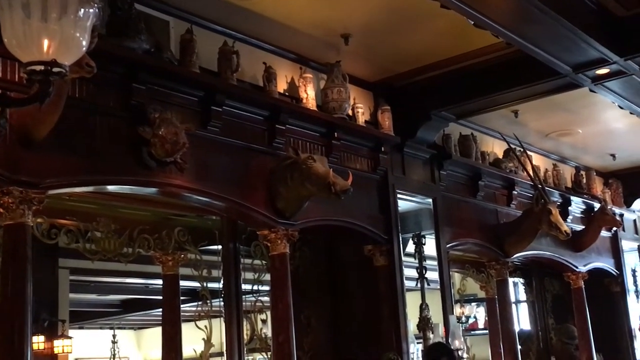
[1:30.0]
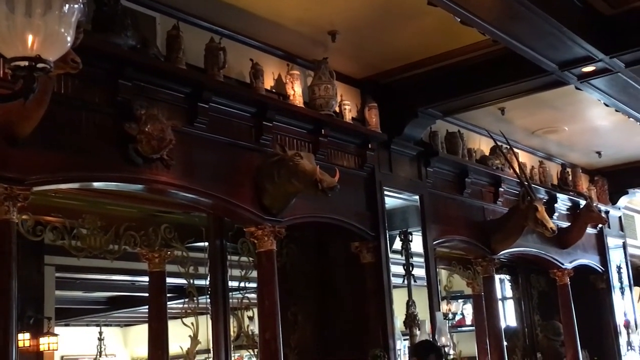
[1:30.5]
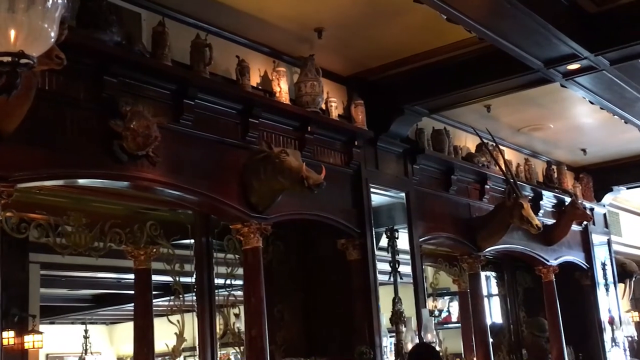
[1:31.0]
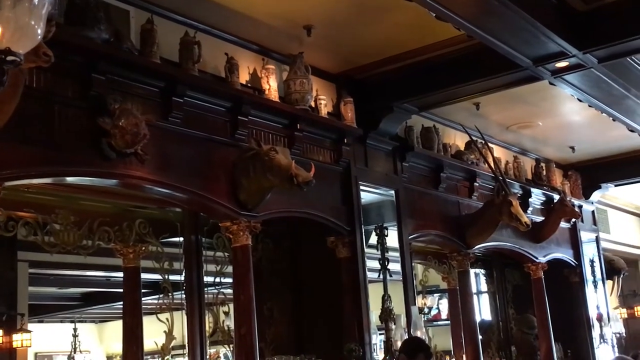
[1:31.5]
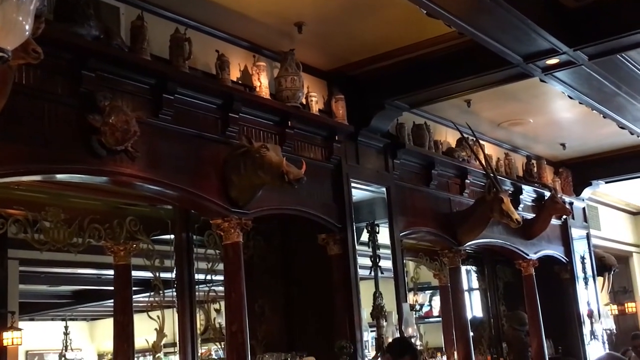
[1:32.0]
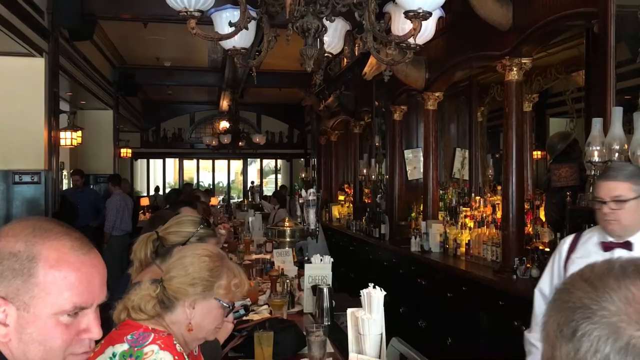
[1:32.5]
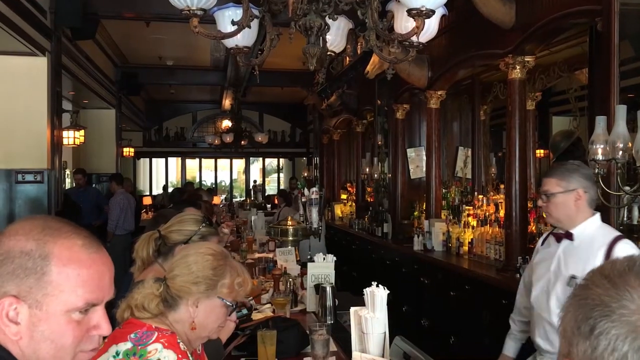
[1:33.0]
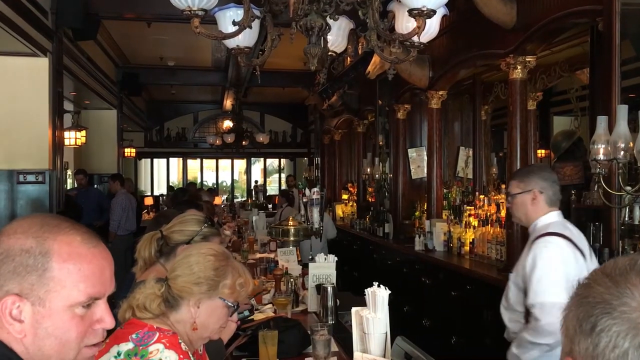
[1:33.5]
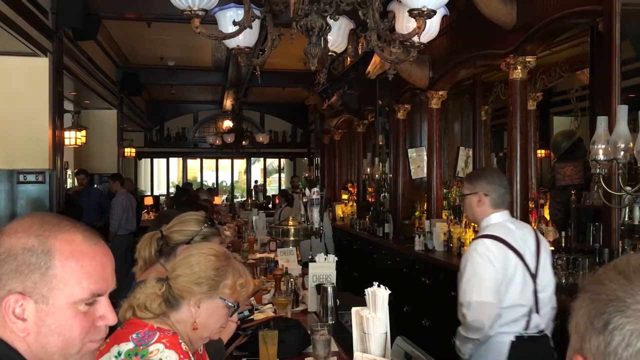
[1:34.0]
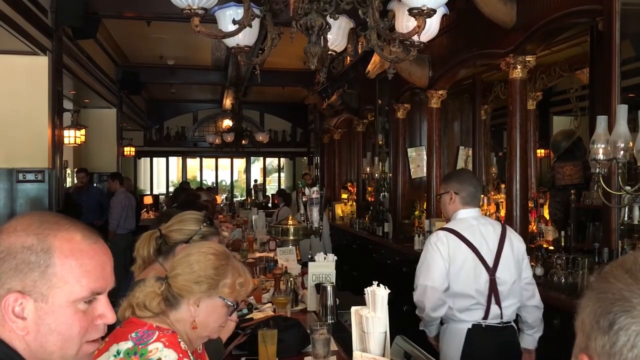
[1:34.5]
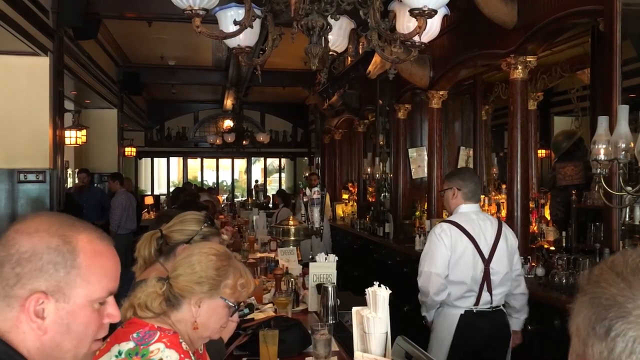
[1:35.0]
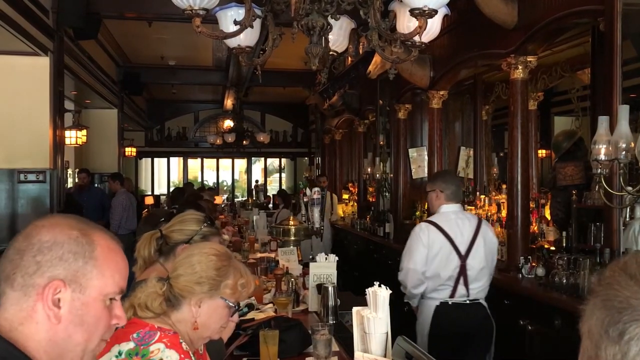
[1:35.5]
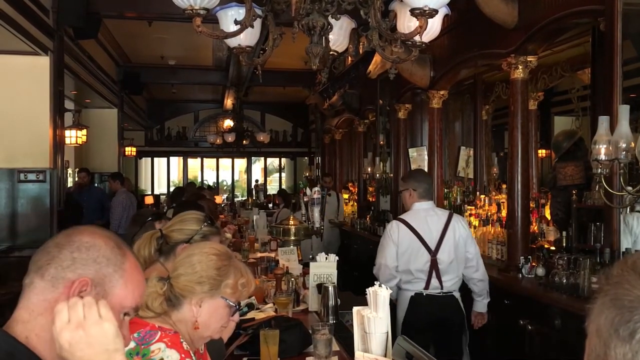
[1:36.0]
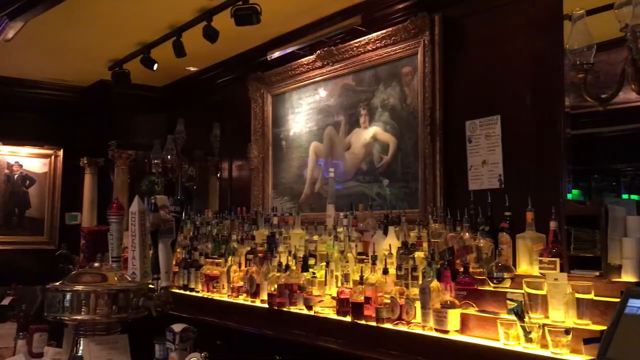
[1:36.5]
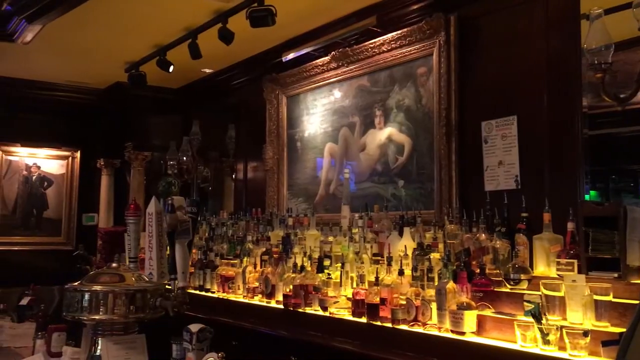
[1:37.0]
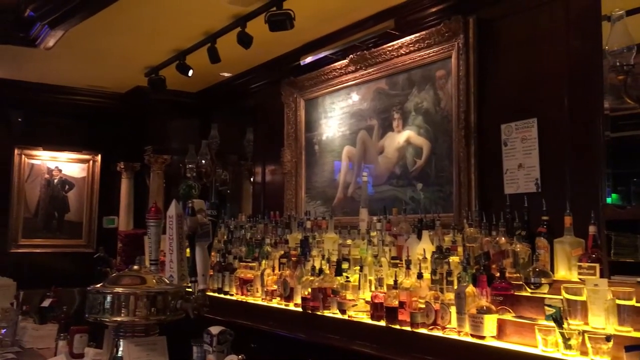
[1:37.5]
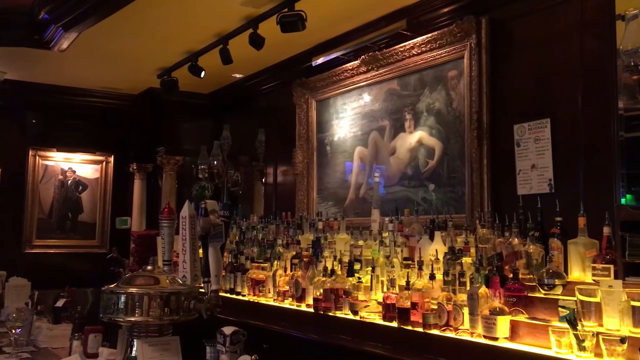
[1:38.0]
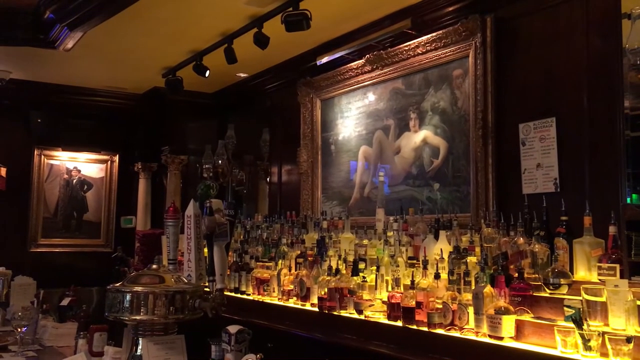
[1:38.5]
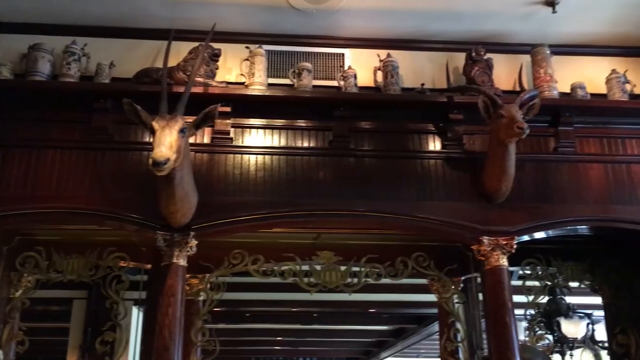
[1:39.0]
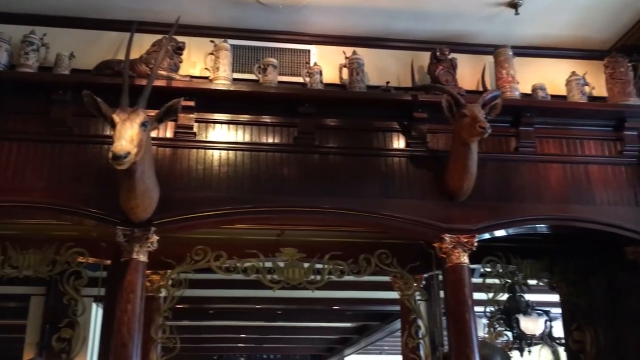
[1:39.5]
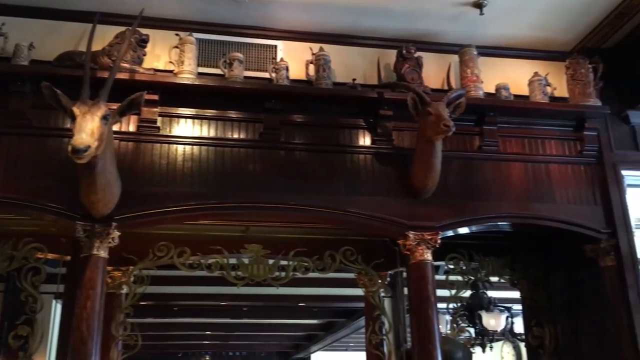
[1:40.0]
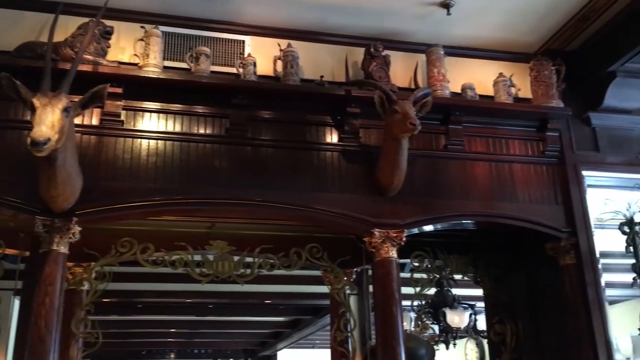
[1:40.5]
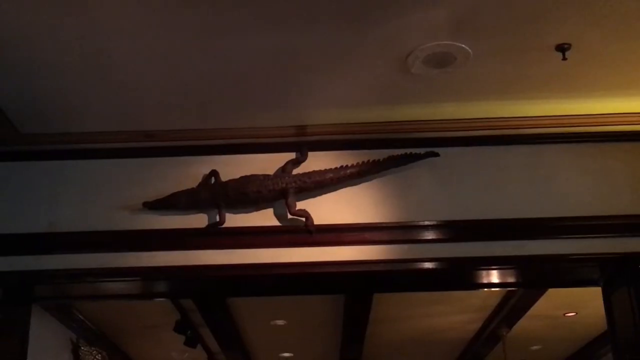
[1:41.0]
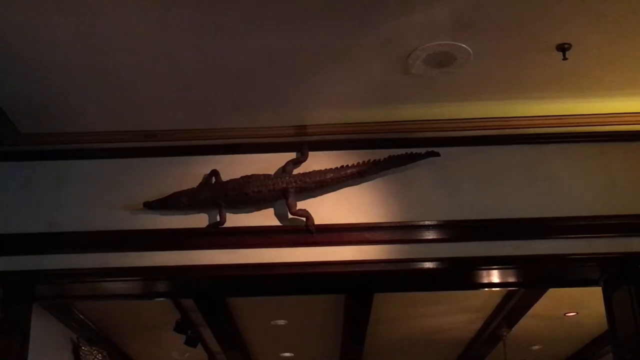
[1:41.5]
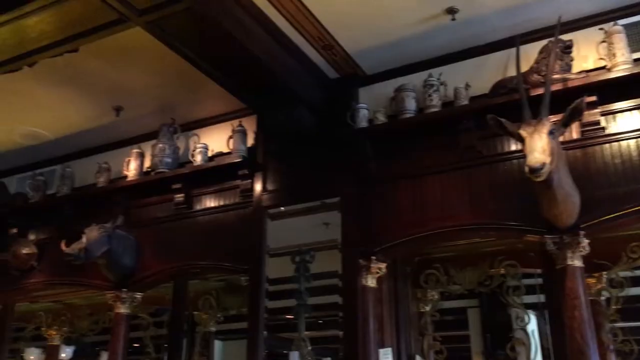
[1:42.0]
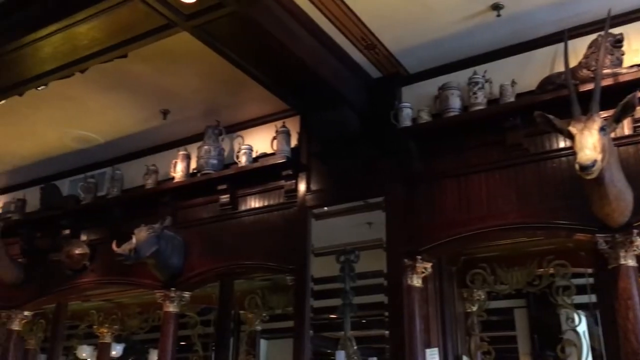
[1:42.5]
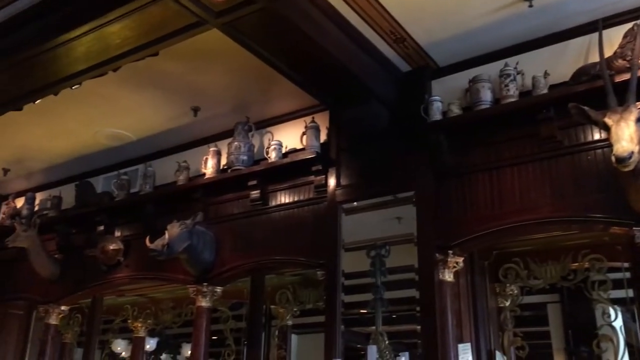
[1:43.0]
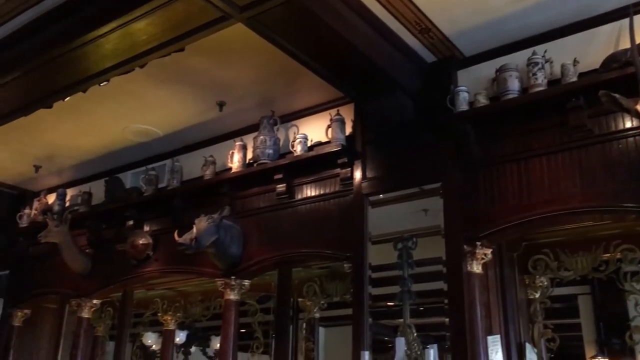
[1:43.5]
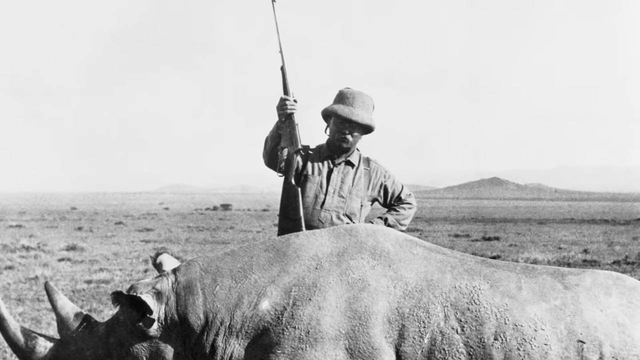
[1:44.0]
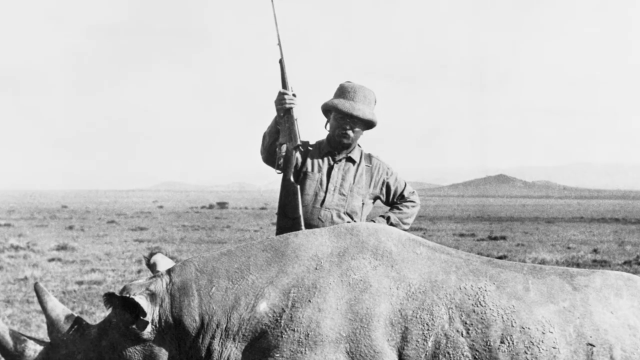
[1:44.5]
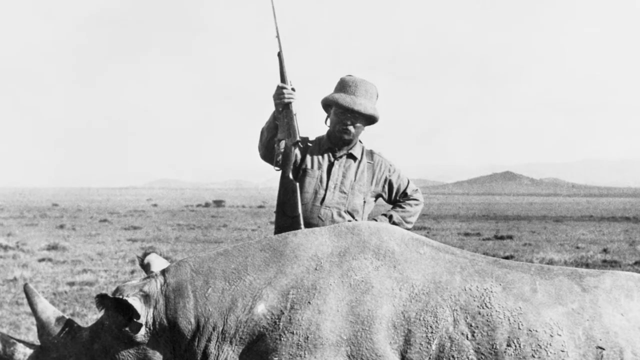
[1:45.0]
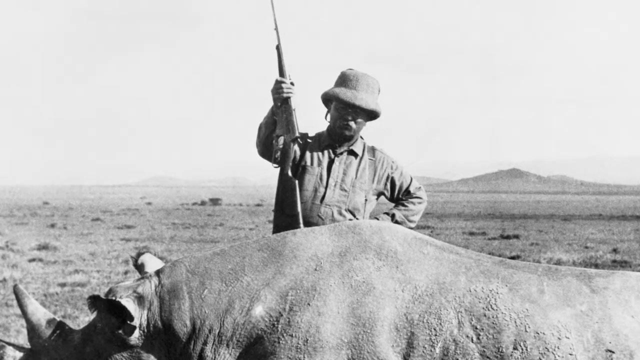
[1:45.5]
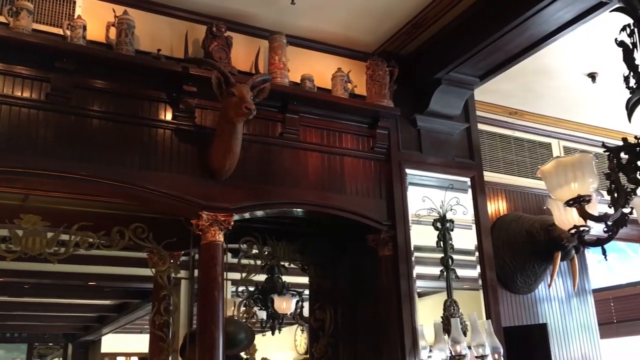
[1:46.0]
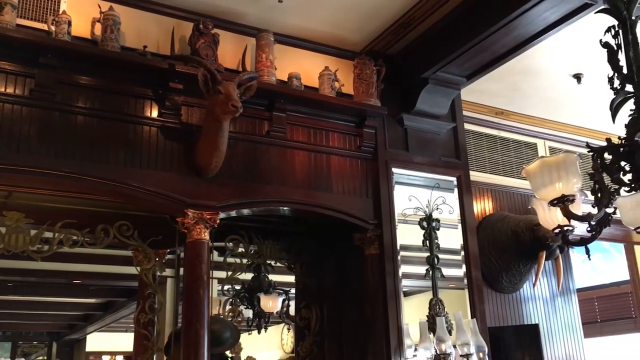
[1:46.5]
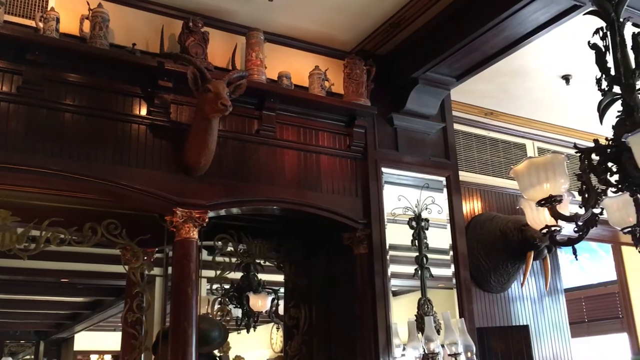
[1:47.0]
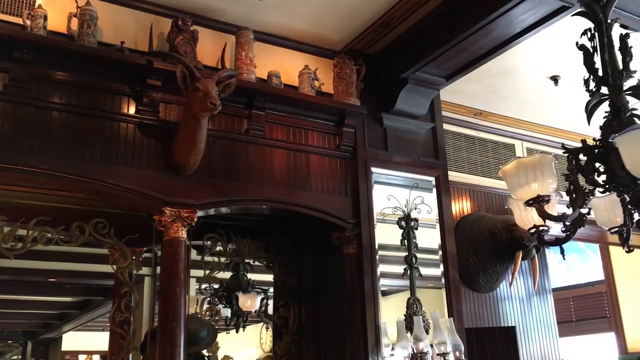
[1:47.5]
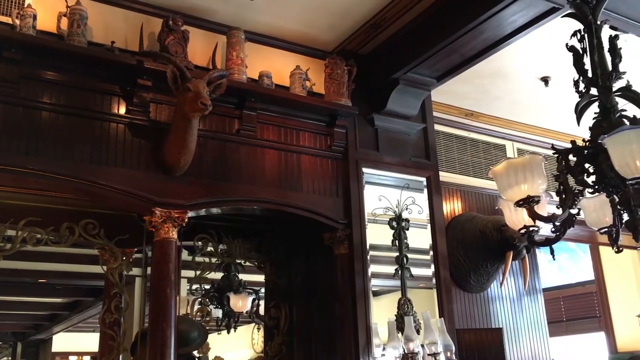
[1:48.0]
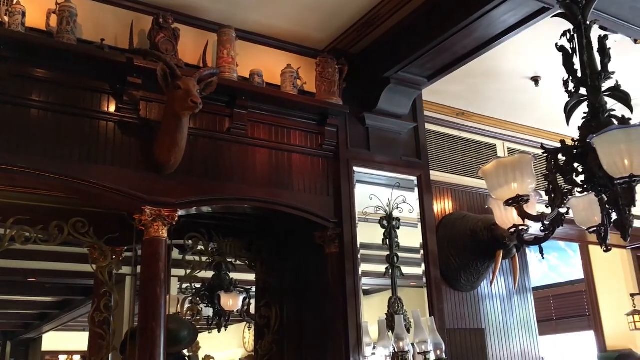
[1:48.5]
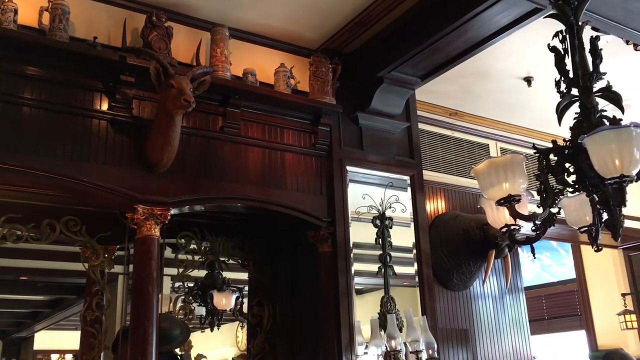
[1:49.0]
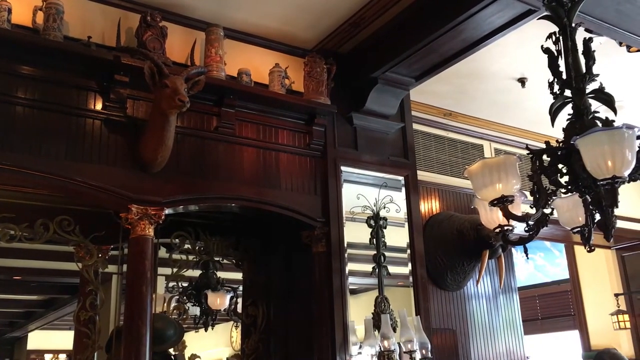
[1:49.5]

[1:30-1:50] People are sitting at the bar. The man closest to the camera tilts his head and scratches his head around his ears with his right hand, while the women next to him seem undeterred, very focused and looking down. The bar area is then shown with no people. The artwork in the middle, around the bottles, looks like a woman lounging, with lights shining on it. There are wildlife figures, probably animals seen in Africa: an antelope, possibly a warthog, and an alligator. They look taxidermied and are on the wall, along with other decor that looks like vases, jars and pottery. The interior is decorated with wood beams of a very dark, rich wooden color, probably a deep, dark stain, possibly deep brown or cherry.